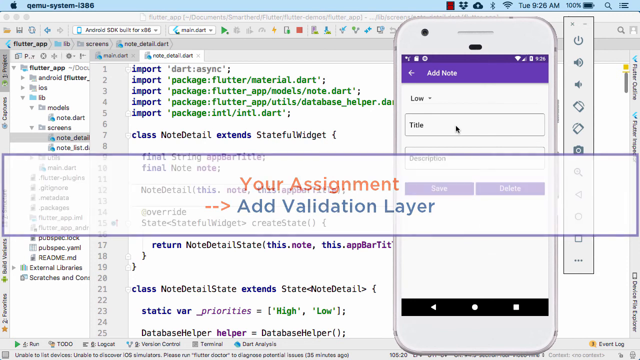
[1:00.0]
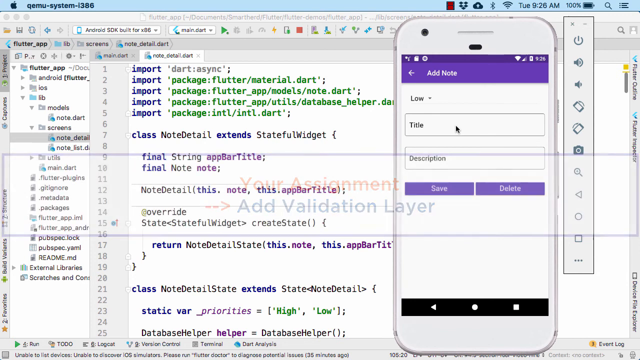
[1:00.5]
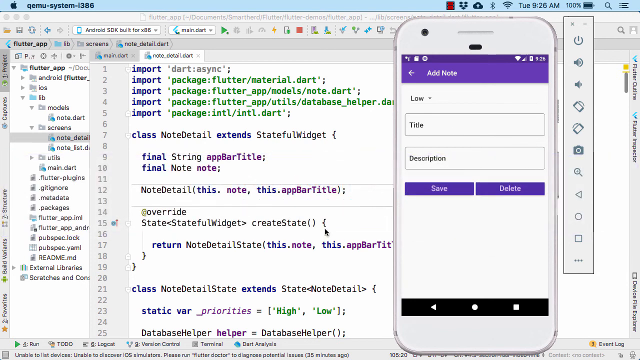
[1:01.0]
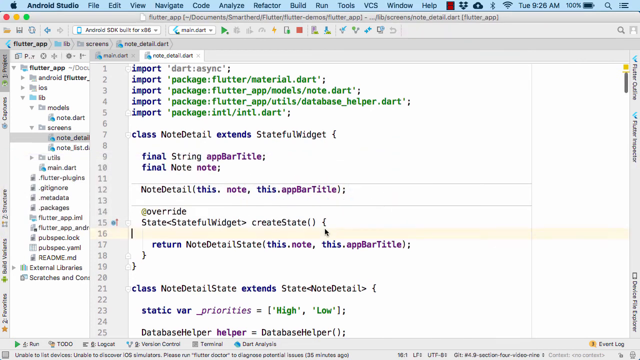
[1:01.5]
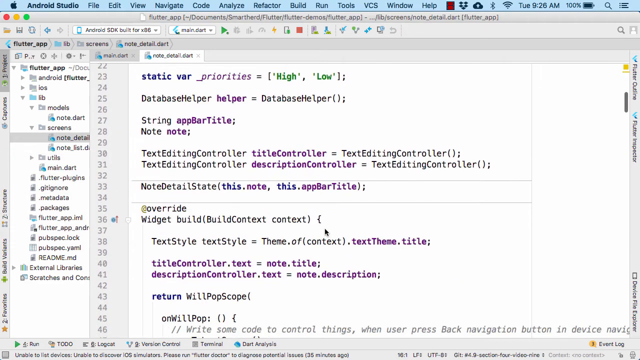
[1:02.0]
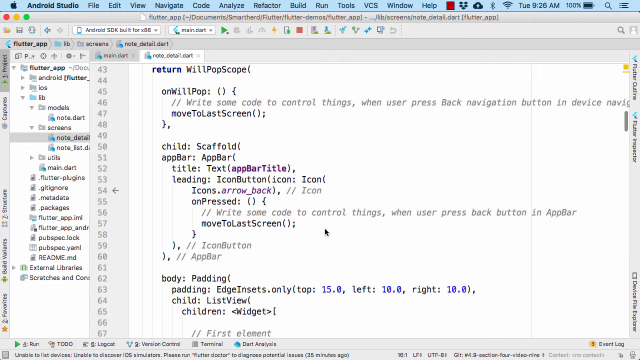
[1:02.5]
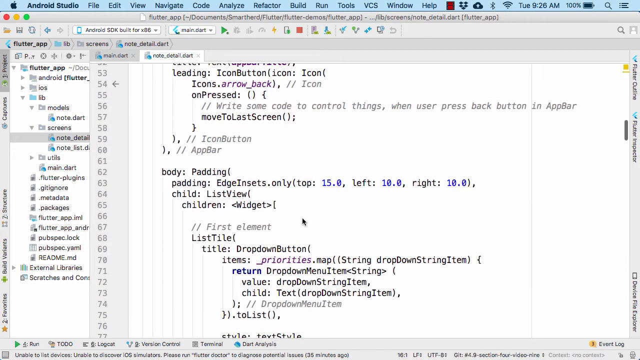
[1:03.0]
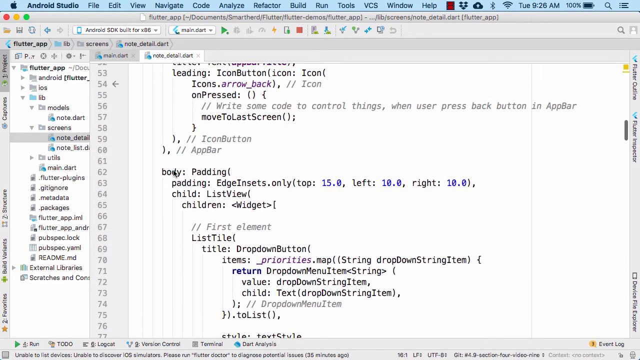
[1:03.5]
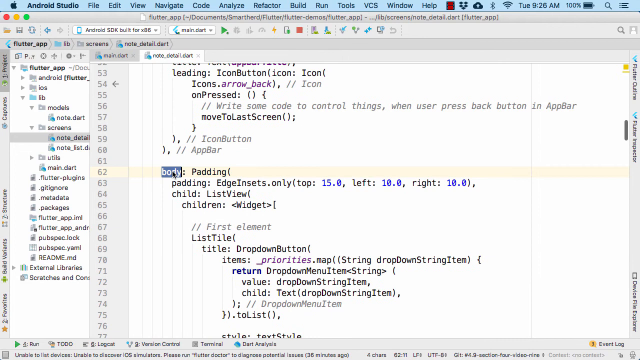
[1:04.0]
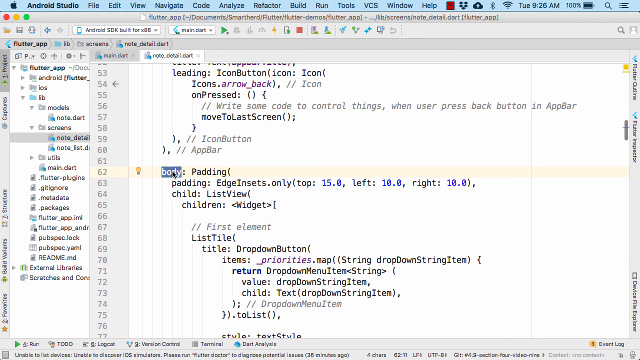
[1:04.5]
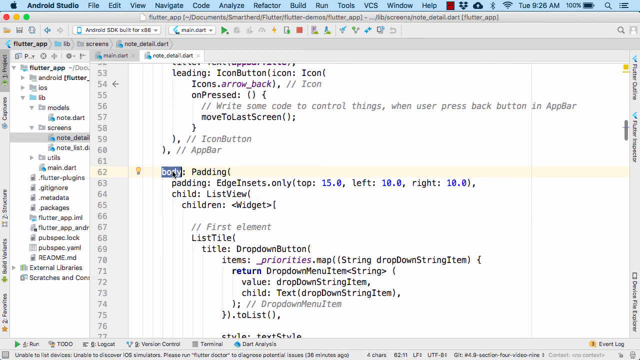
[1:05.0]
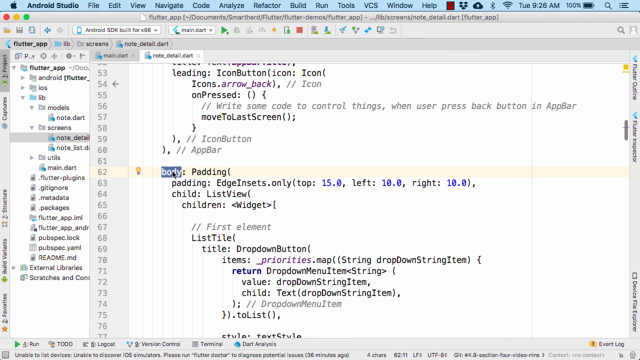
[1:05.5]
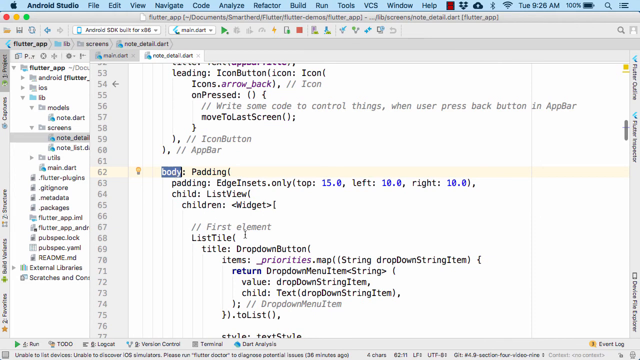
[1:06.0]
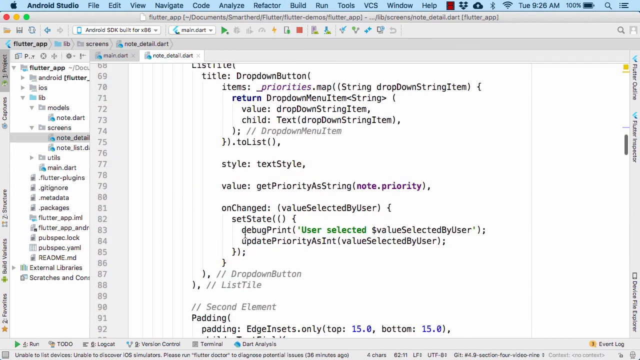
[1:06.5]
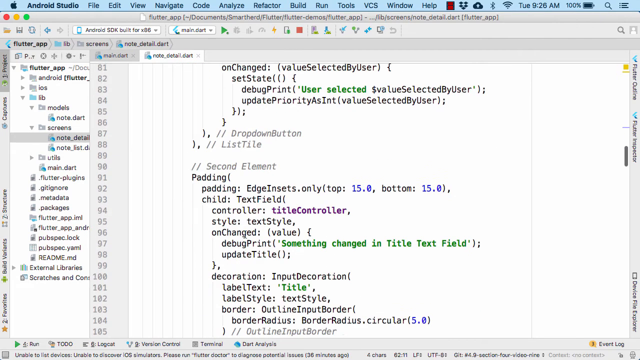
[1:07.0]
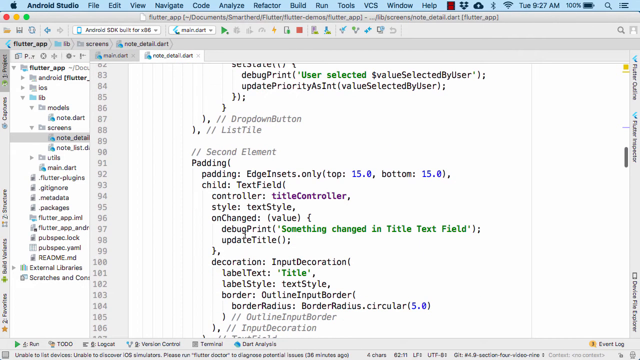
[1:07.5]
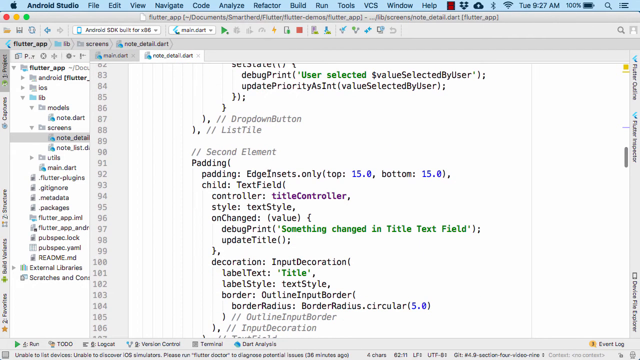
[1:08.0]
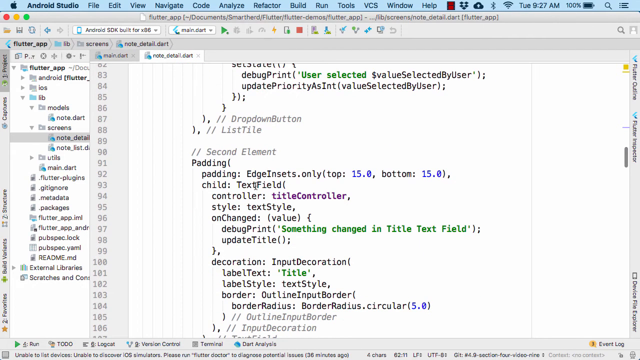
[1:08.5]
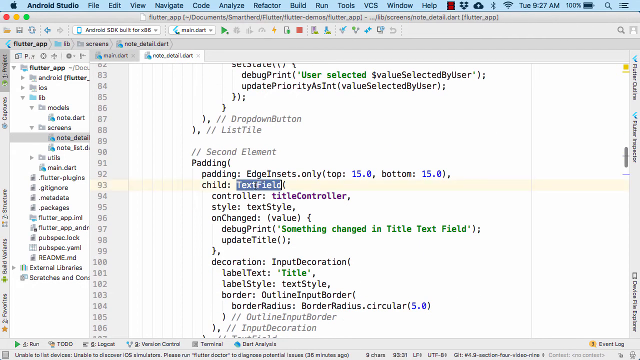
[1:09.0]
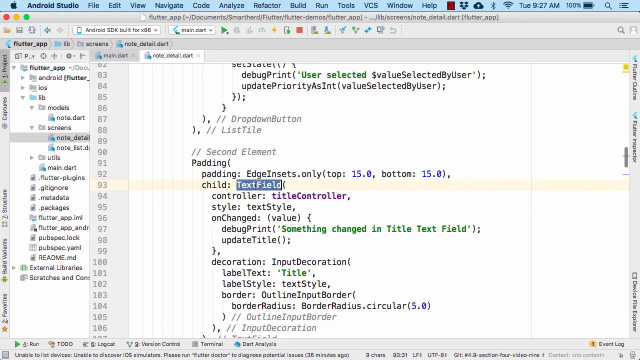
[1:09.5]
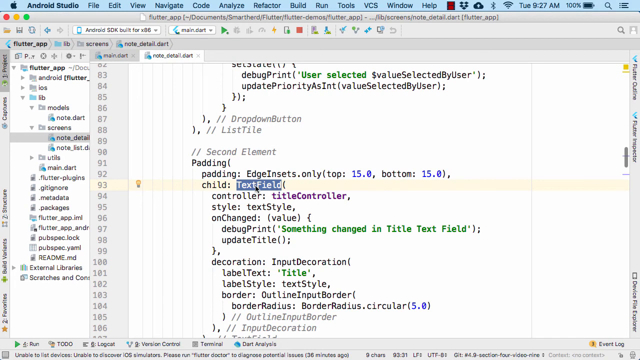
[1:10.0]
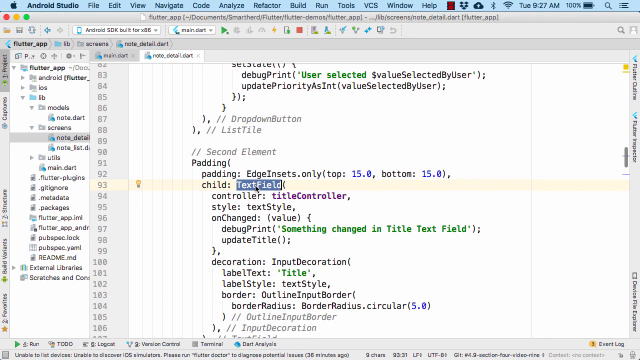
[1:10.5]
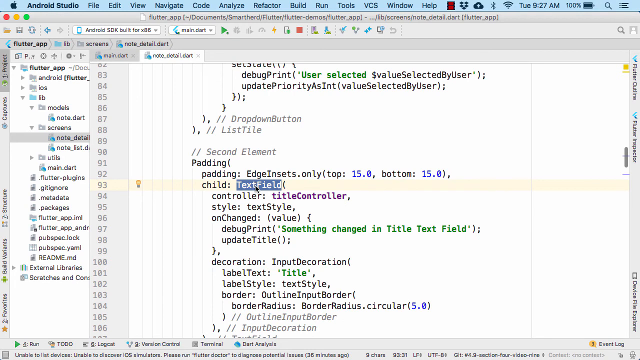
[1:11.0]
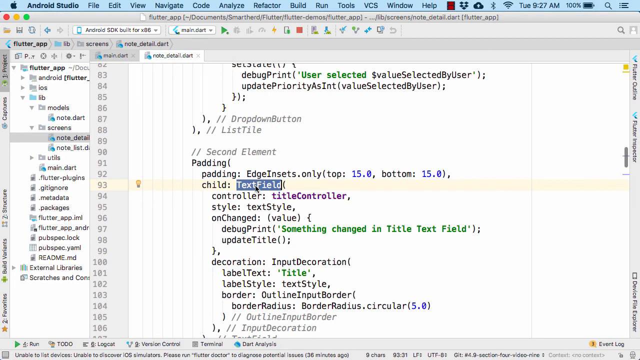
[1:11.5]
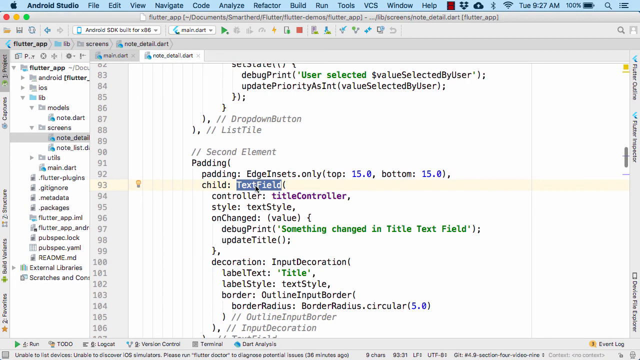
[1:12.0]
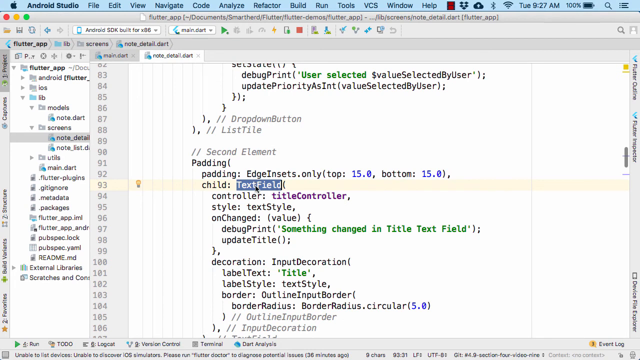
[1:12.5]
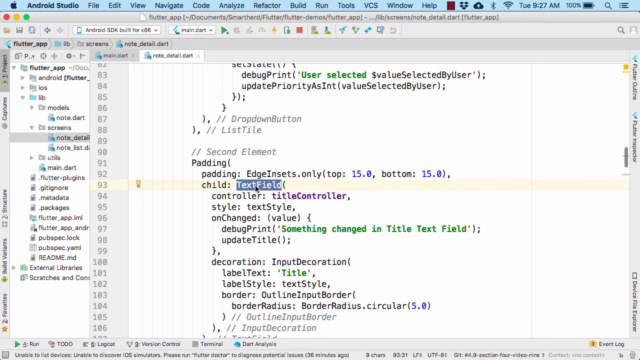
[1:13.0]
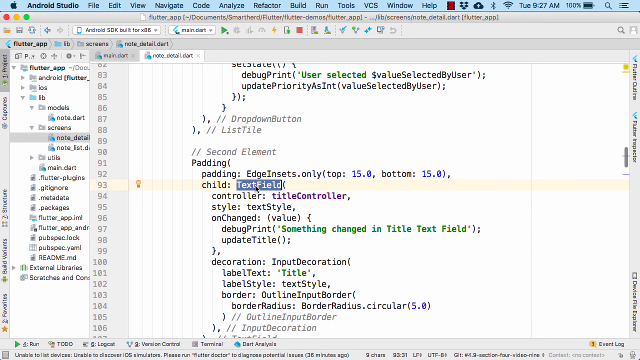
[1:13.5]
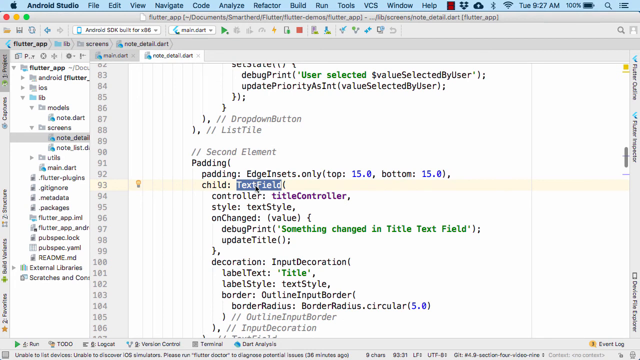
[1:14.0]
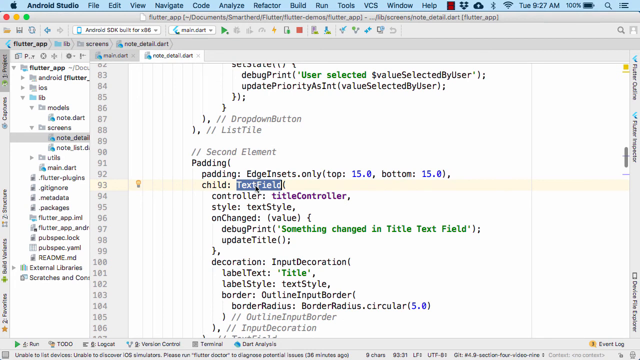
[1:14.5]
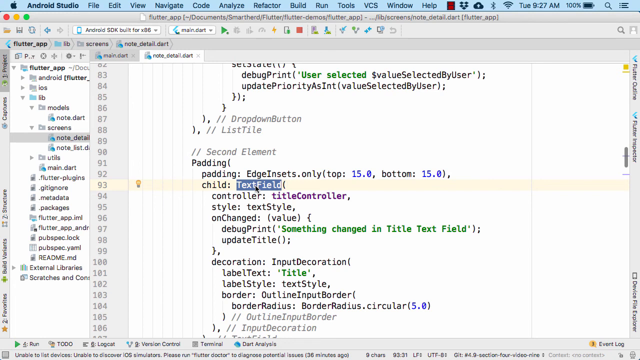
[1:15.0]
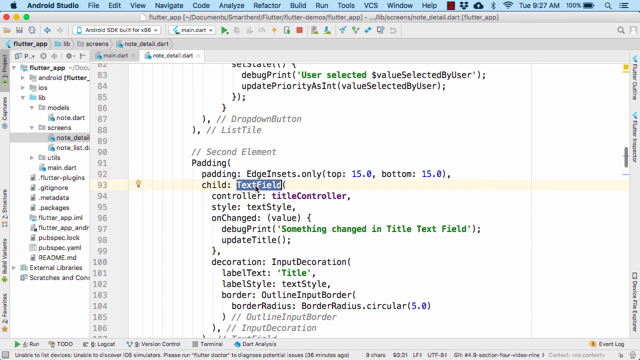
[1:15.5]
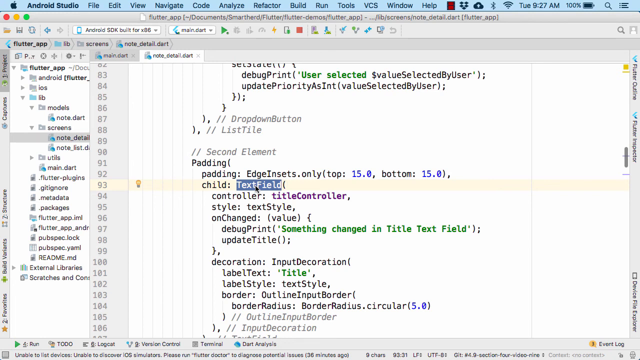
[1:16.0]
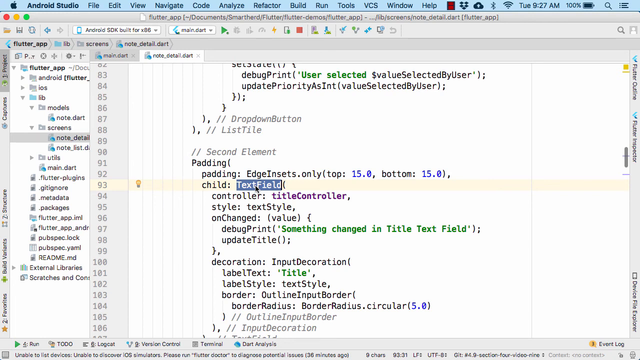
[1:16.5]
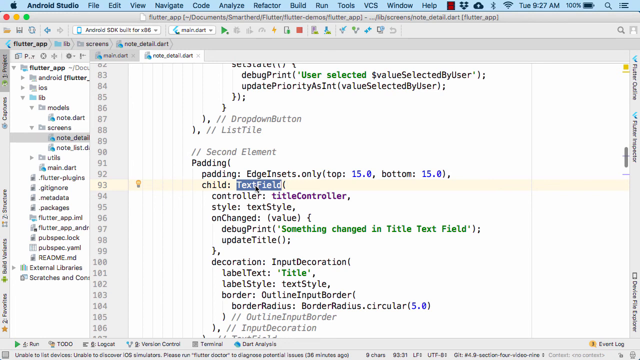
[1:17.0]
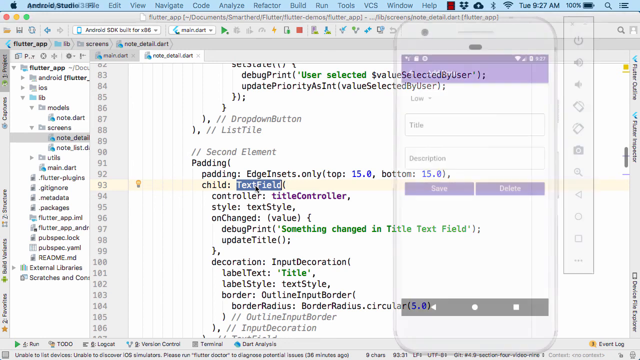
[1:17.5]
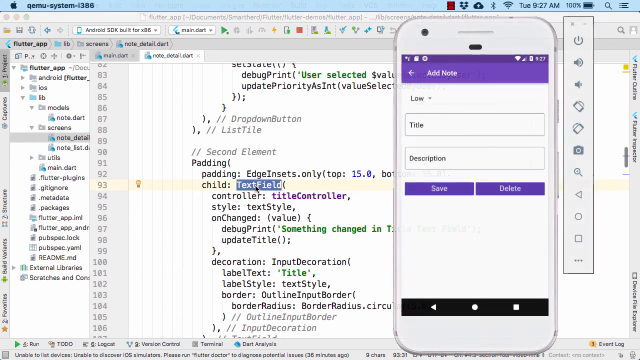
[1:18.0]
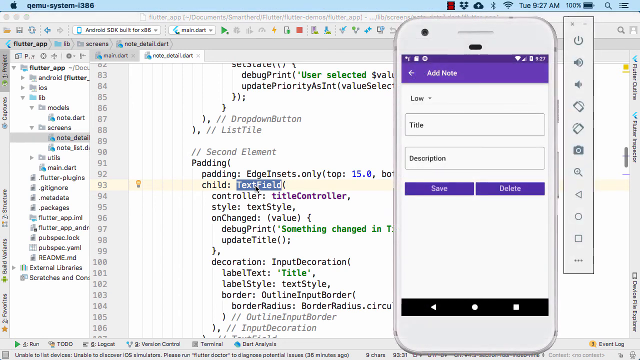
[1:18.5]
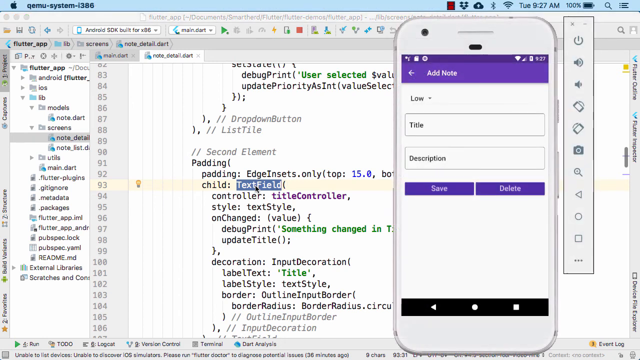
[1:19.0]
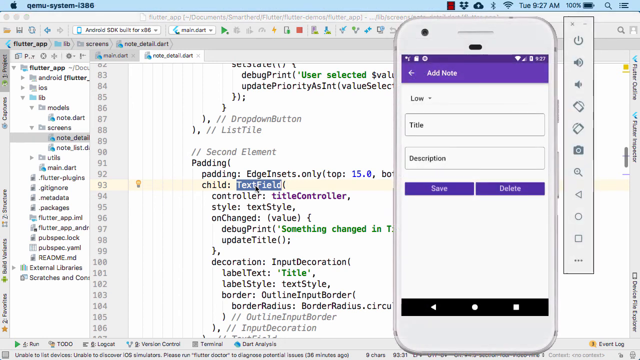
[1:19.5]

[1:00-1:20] After showing the phone, the presenter moves over to the code and shows the different text fields that were created. A text field is shown with a debug statement saying that something changed in the title text field. The presenter seems to be explaining how or where the validation will occur, without going into detail yet.